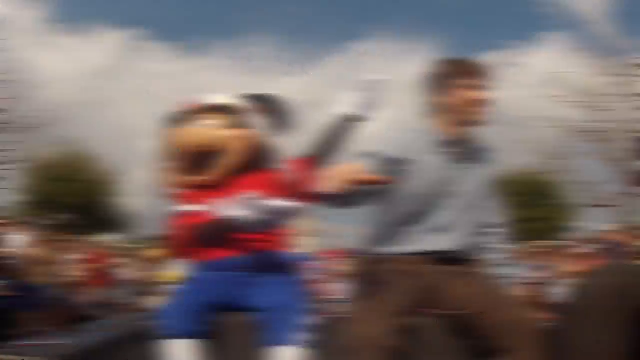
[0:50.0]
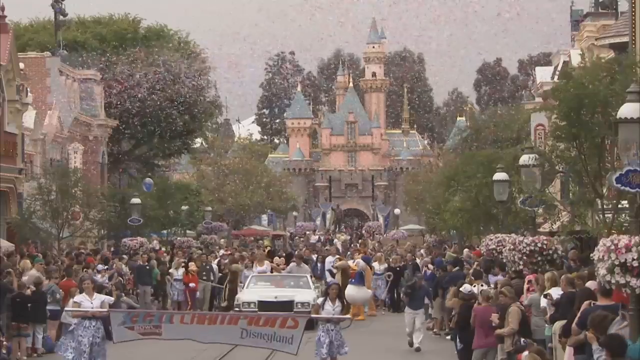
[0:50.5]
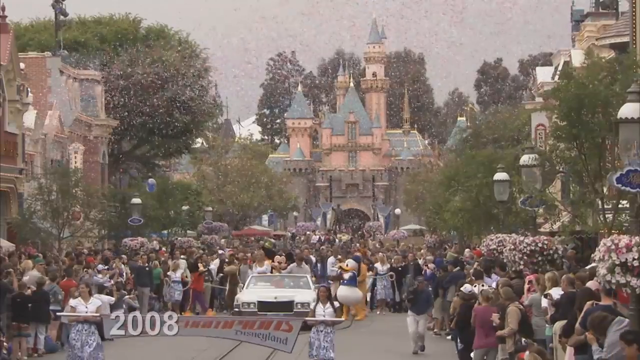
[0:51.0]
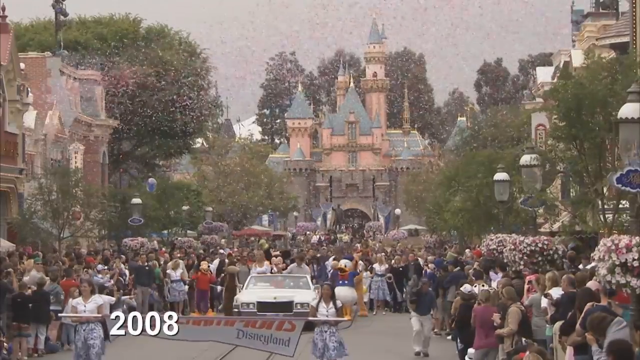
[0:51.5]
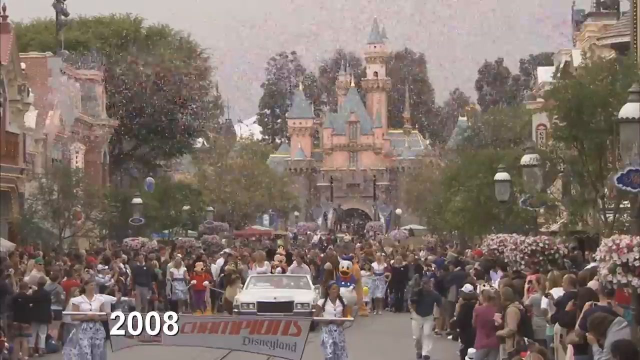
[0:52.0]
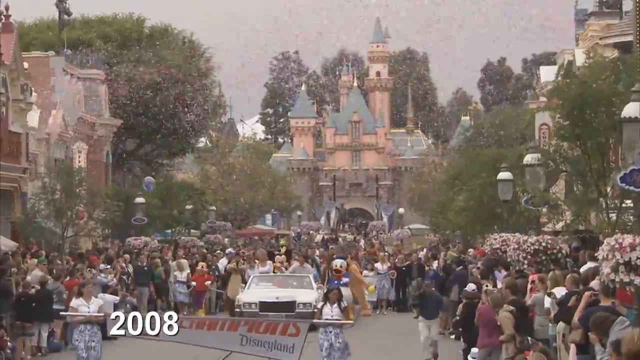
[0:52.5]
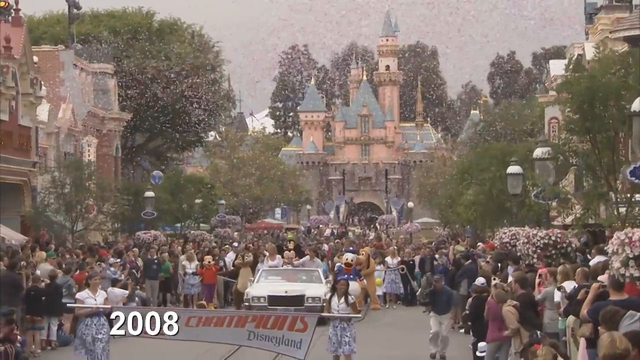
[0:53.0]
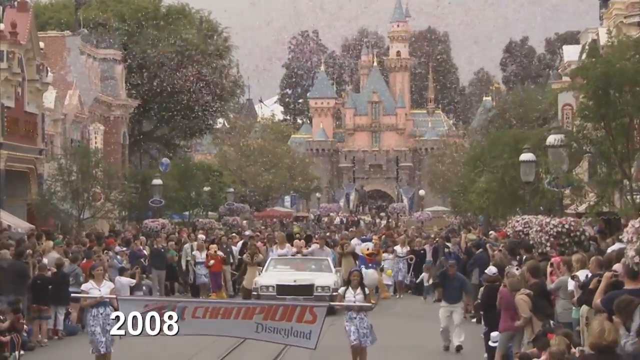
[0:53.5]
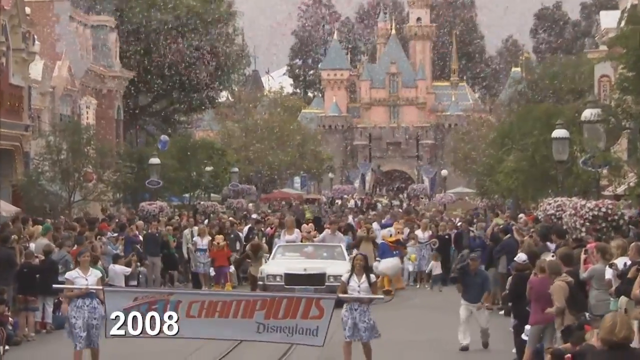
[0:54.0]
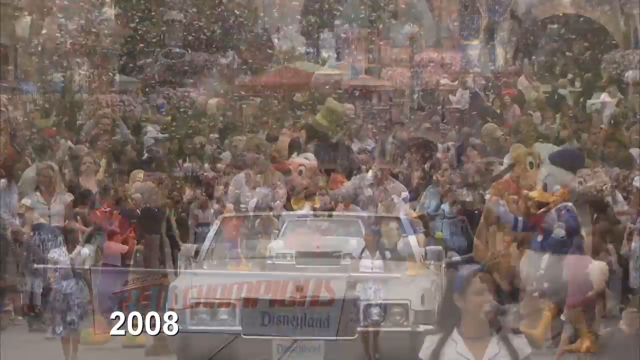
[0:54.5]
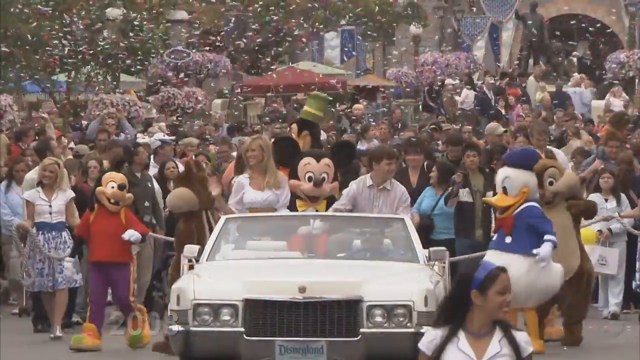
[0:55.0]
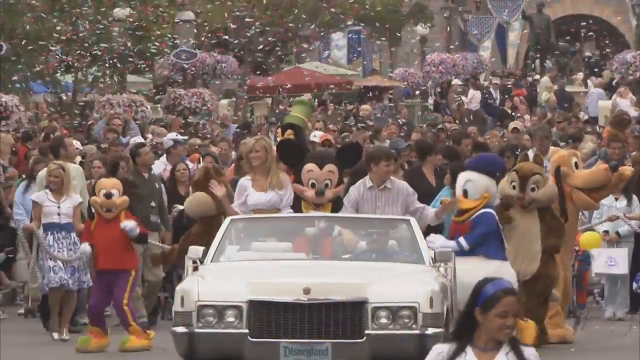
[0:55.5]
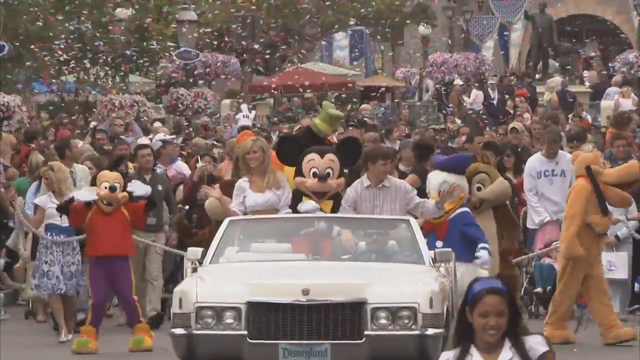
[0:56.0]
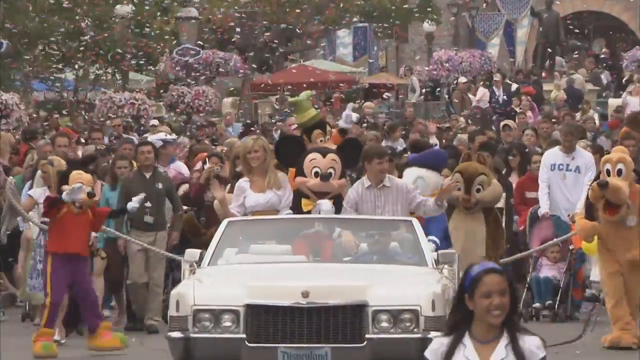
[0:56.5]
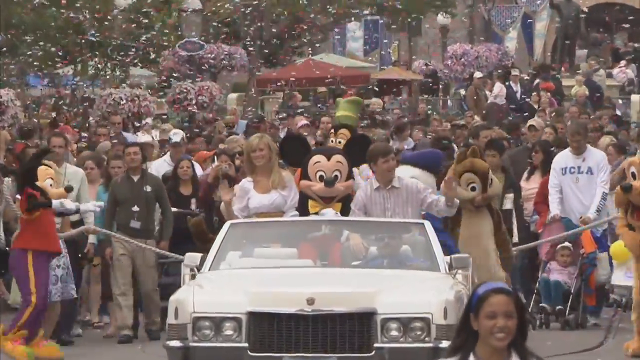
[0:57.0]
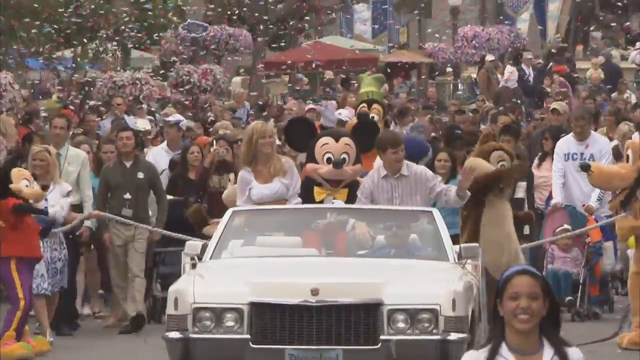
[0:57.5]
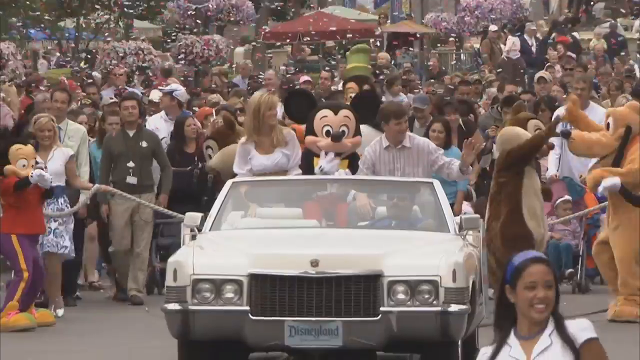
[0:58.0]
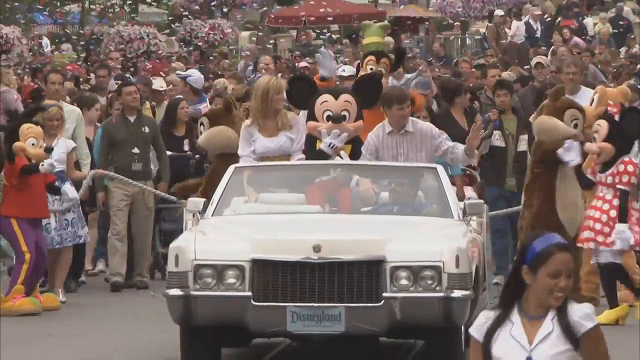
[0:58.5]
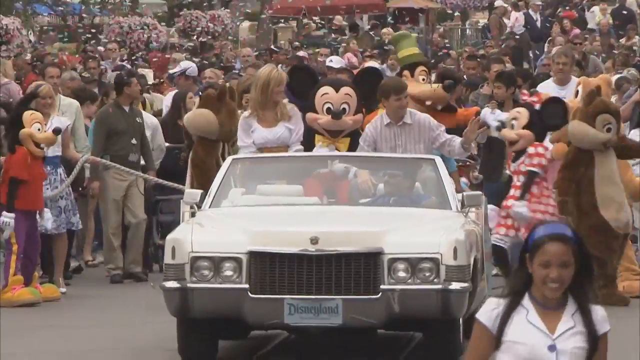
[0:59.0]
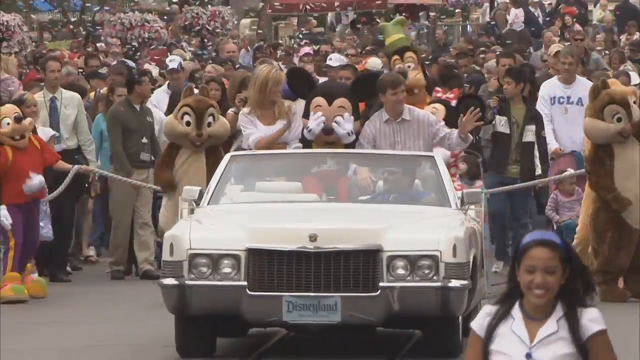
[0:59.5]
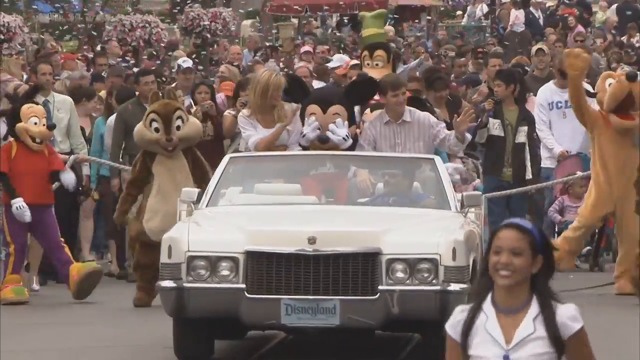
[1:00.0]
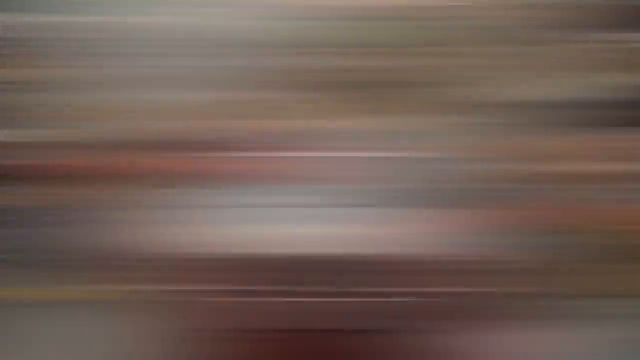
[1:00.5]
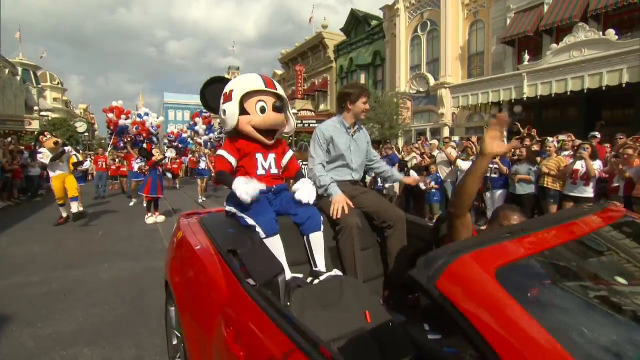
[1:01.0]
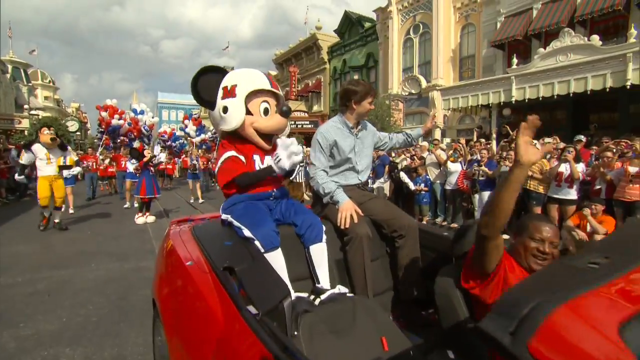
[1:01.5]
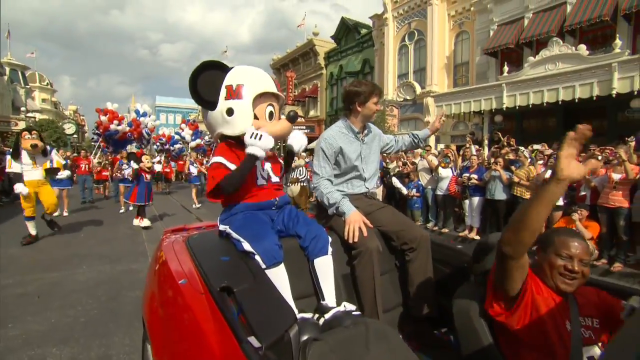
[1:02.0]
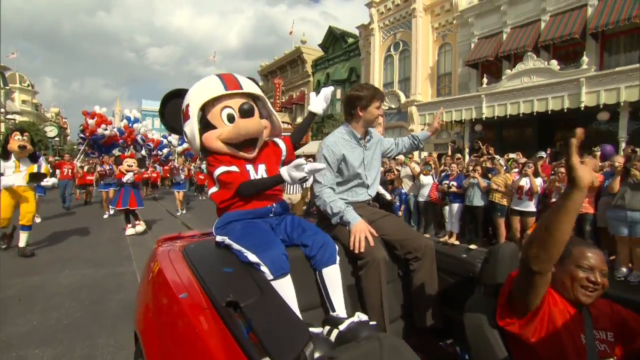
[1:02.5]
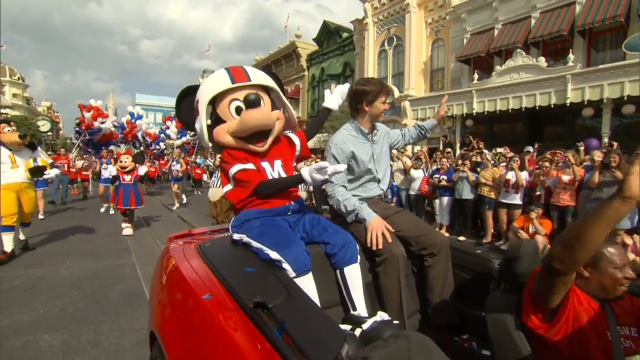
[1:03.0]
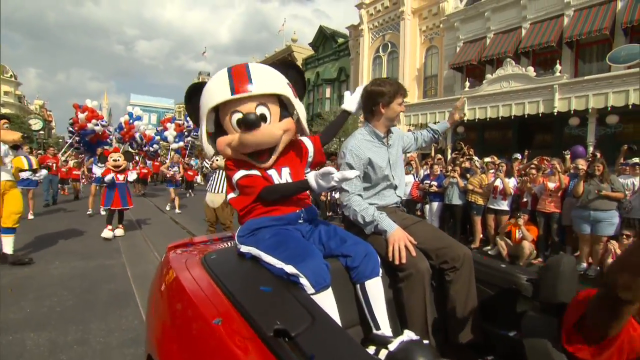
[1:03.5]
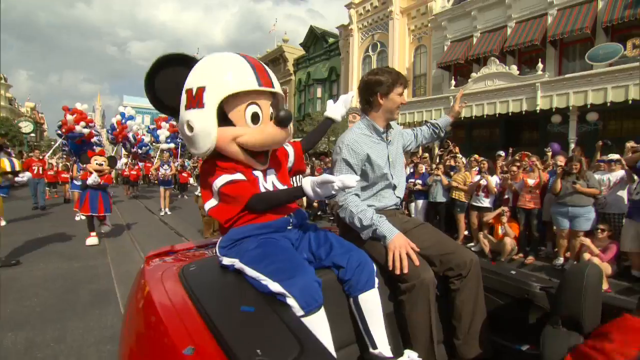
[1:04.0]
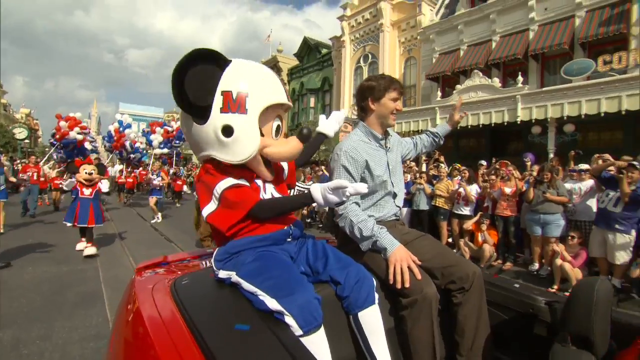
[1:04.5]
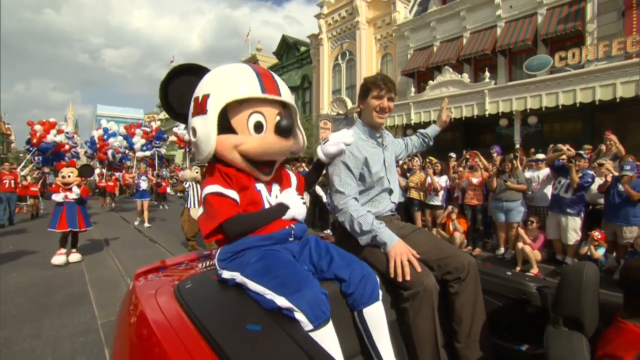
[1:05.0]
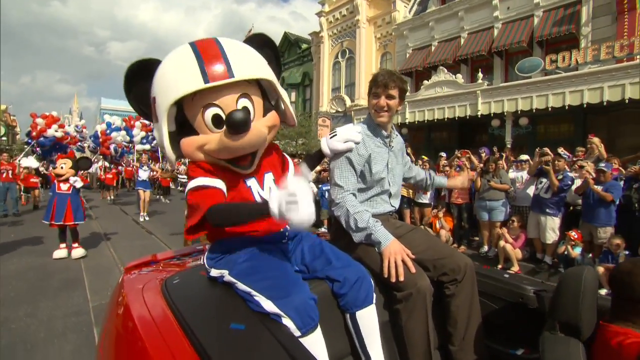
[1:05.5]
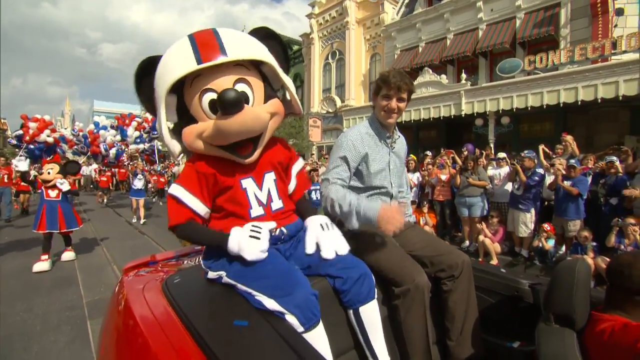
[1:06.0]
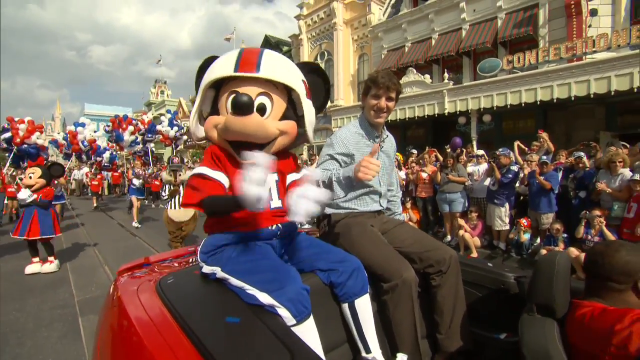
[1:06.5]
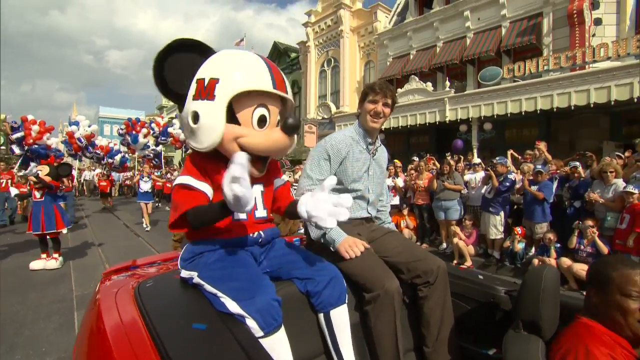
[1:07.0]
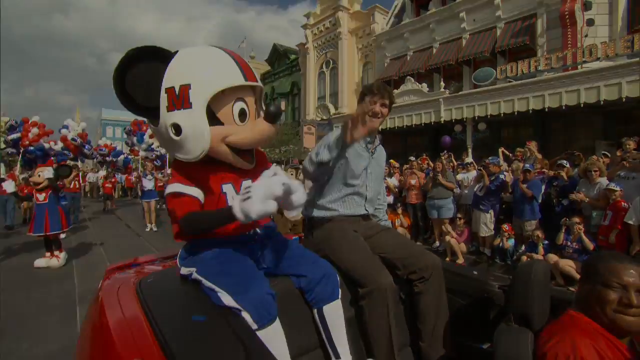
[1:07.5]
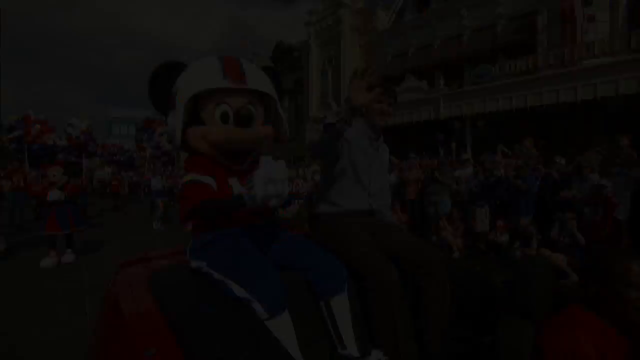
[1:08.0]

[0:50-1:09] What appears to be a flashback of another parade begins, with a caption at the bottom of the screen that says "2008." There is a large crowd on the left and right sides of a parade route, and two people hold some kind of Champions Disneyland sign. Behind them is a car that seems to carry Eli Manning, Mickey Mouse, and another woman sitting in it. Donald Duck stands on the right side and Goofy on the left, with a large, very dense crowd of people behind them and white confetti raining down on top of them. Minnie Mouse enters the frame from the right. After about 10 seconds, the scene quickly transitions back to the current parade, with Eli Manning and Mickey Mouse sitting in the red car. Eli waves to onlookers on the left-hand side while Mickey gestures with both hands toward him. Mickey then places his left hand on Eli's right shoulder, gives a thumbs-up with his right hand toward the camera, and starts to clap as Eli waves with his right hand, and the video ends.